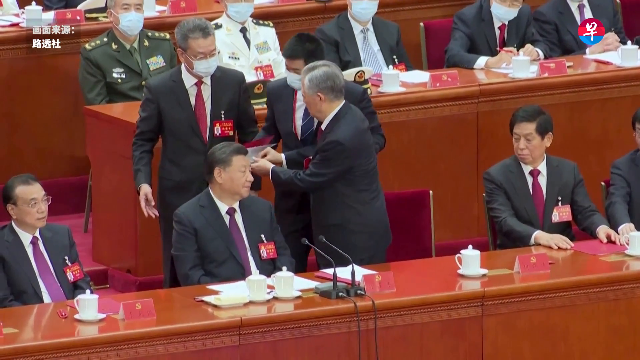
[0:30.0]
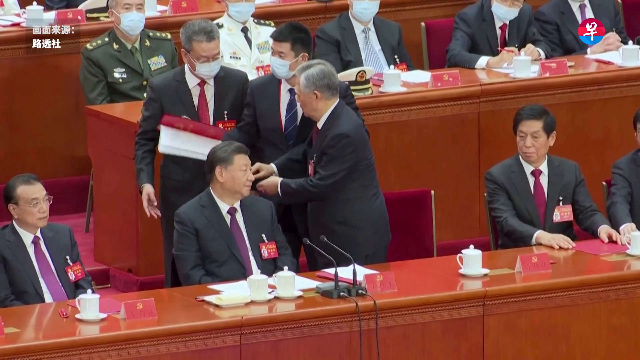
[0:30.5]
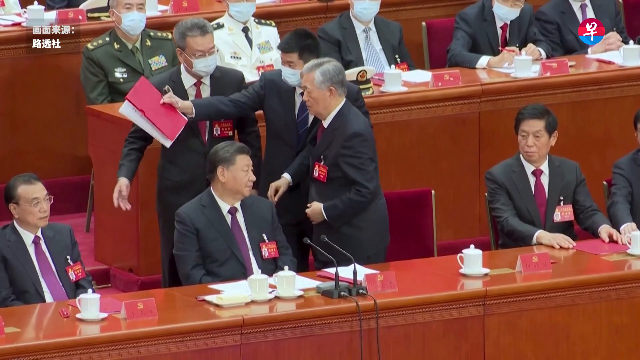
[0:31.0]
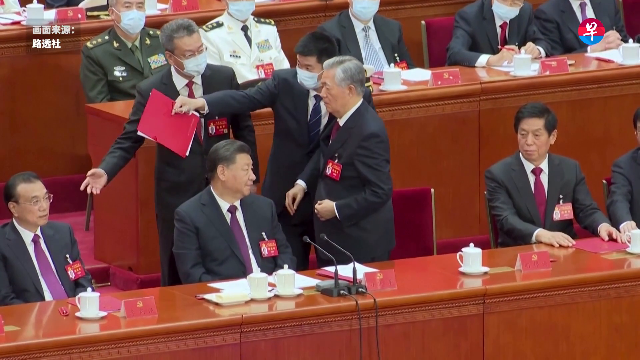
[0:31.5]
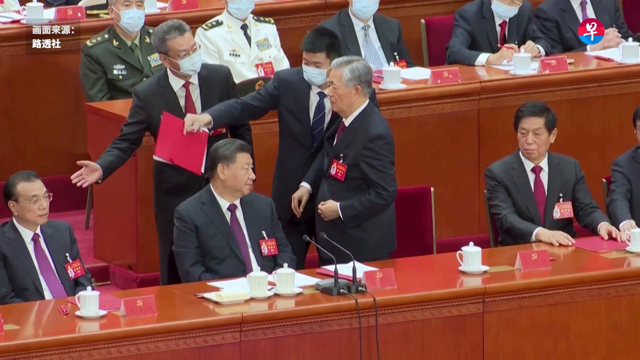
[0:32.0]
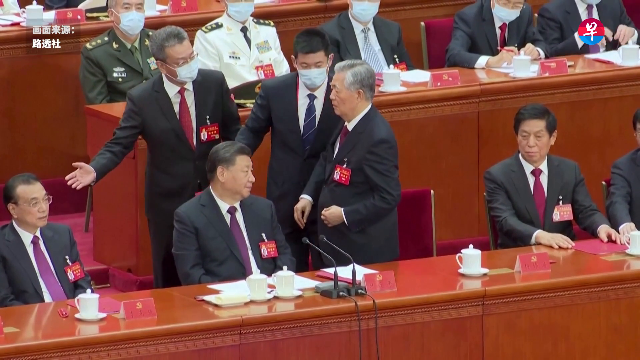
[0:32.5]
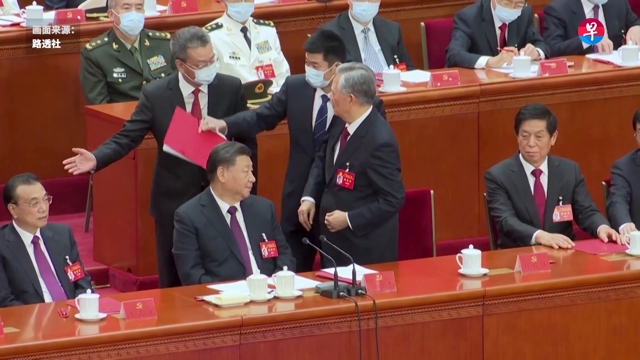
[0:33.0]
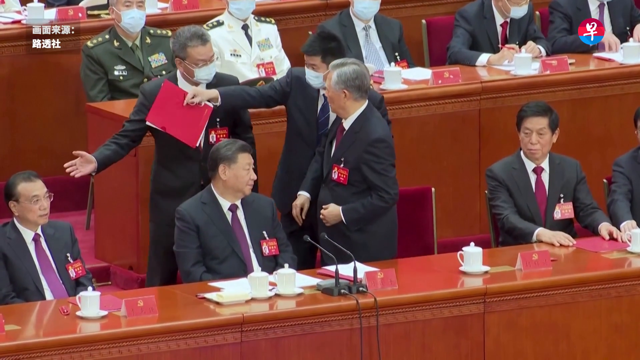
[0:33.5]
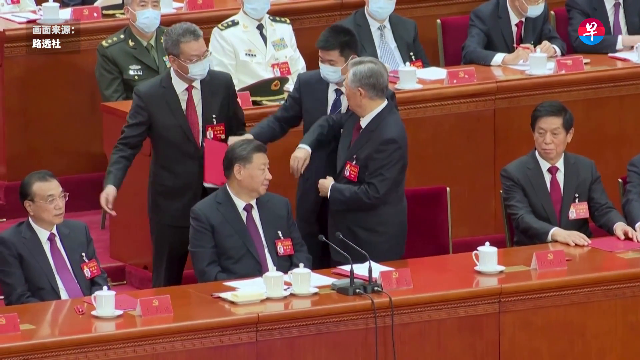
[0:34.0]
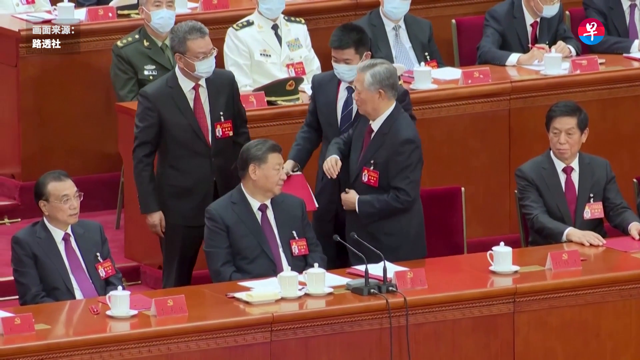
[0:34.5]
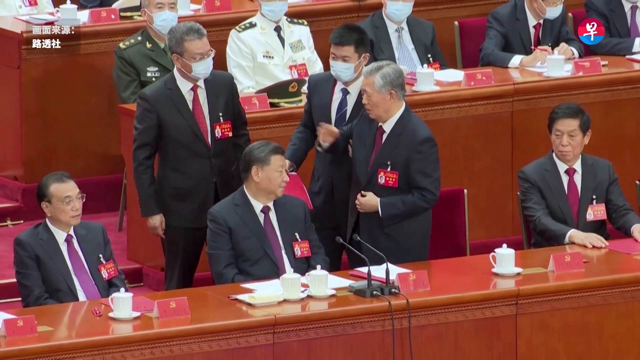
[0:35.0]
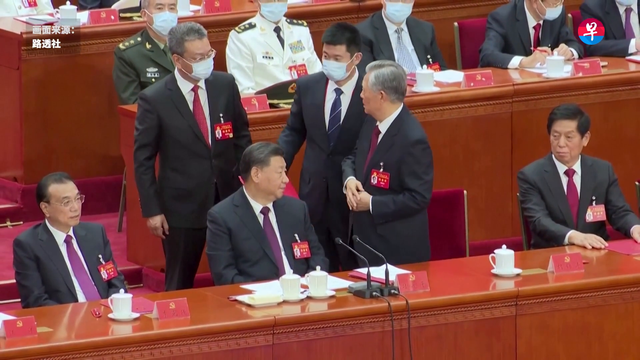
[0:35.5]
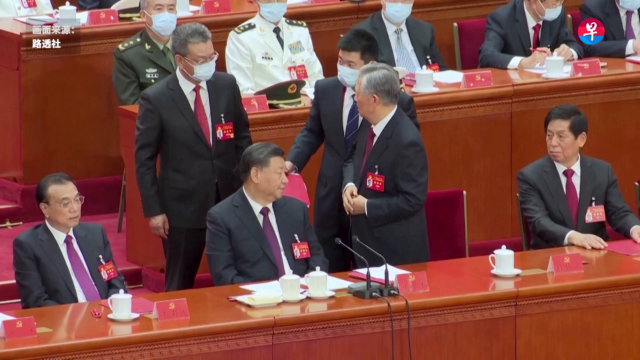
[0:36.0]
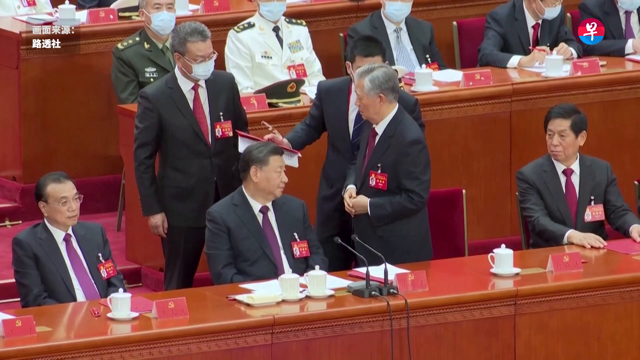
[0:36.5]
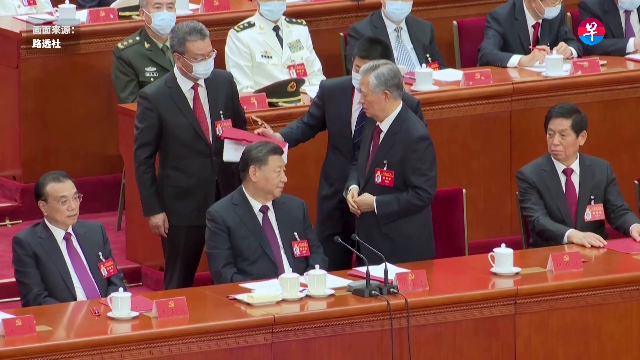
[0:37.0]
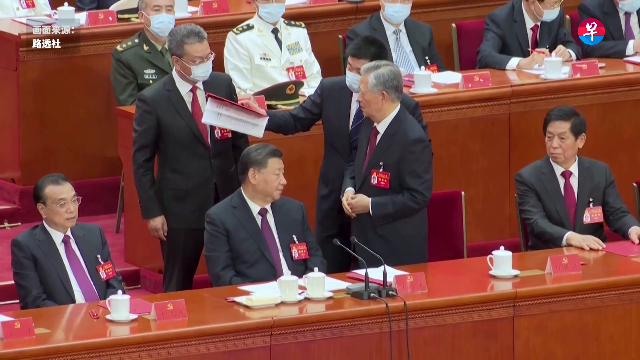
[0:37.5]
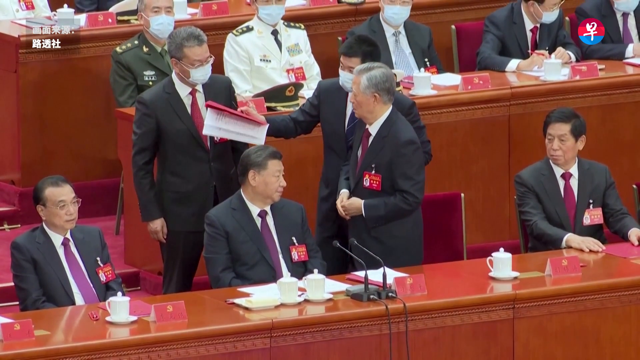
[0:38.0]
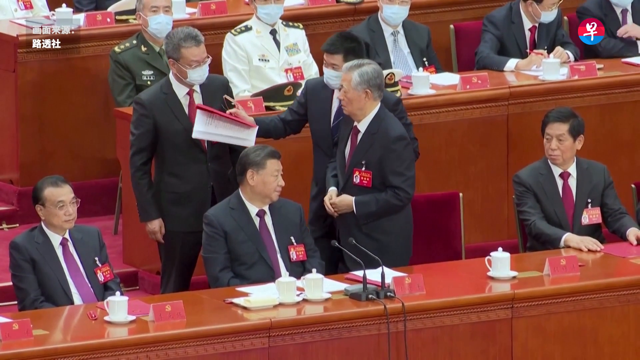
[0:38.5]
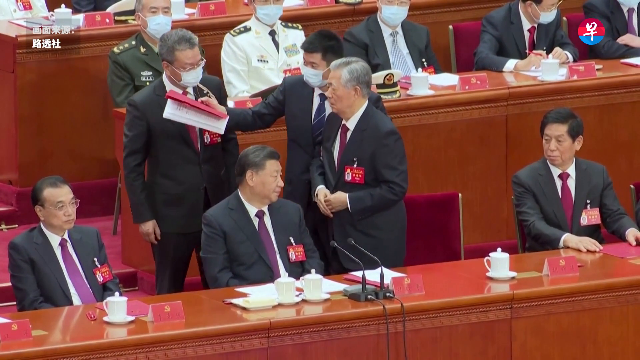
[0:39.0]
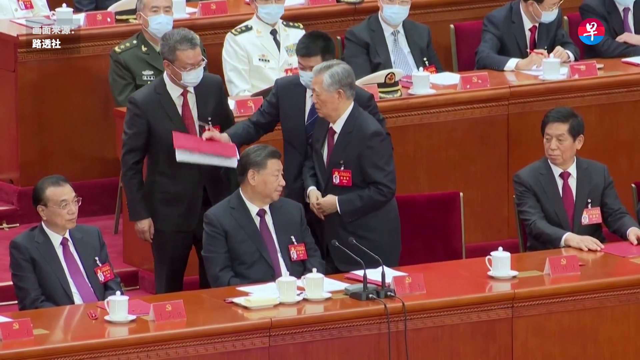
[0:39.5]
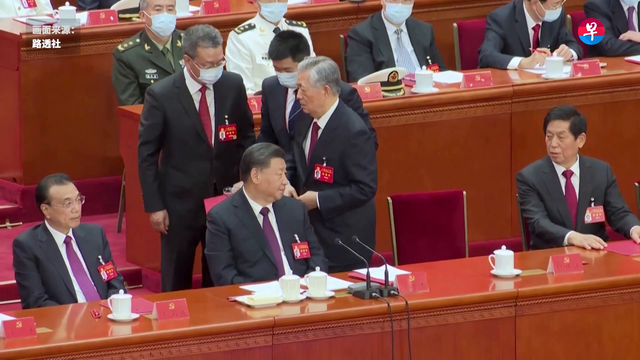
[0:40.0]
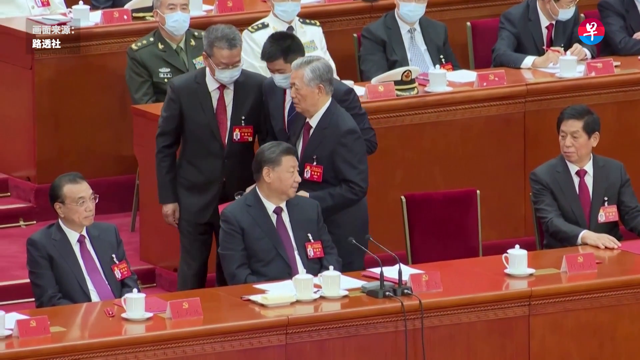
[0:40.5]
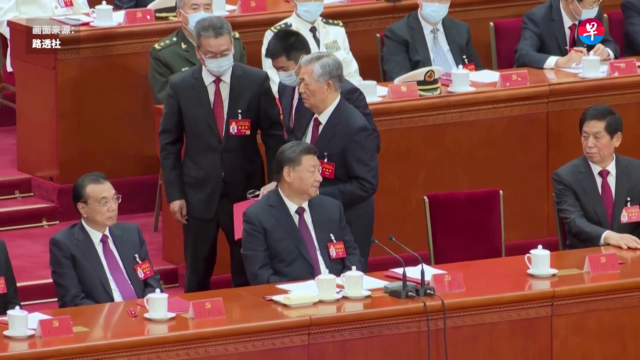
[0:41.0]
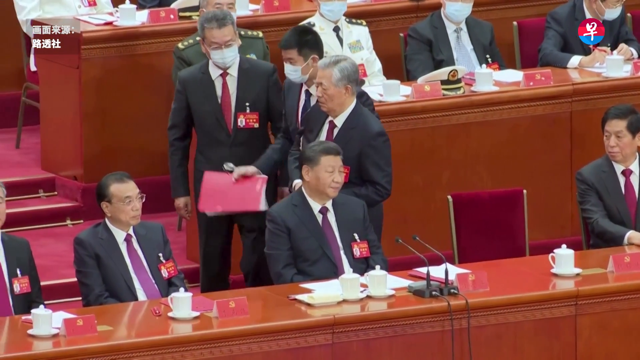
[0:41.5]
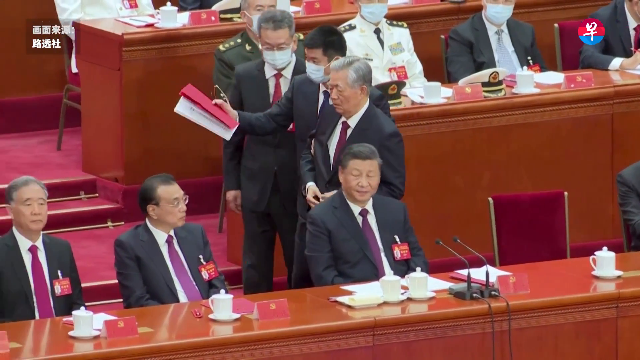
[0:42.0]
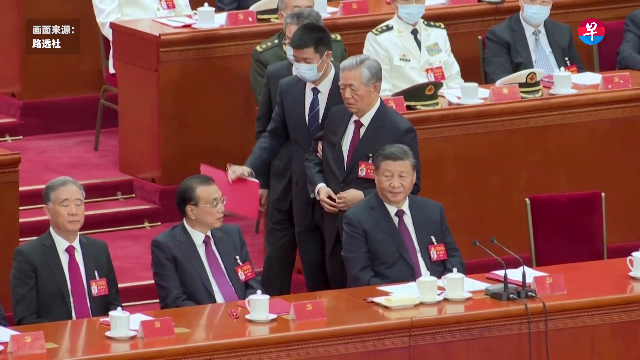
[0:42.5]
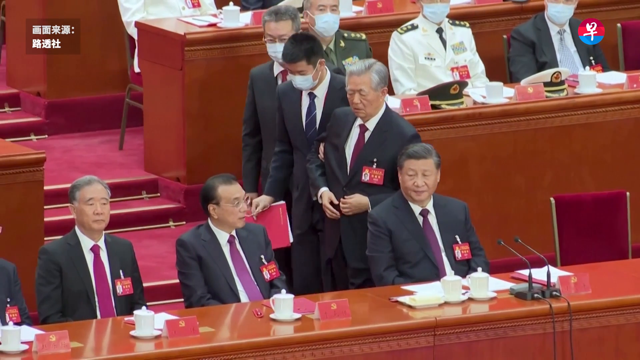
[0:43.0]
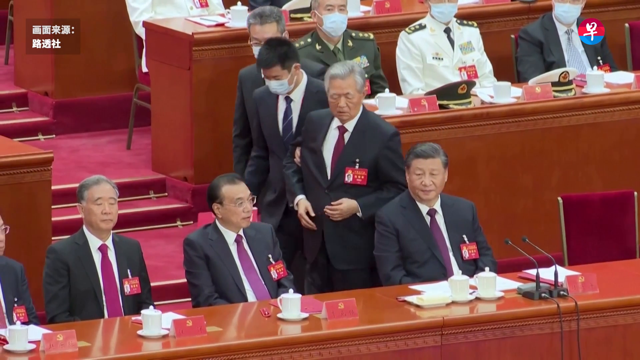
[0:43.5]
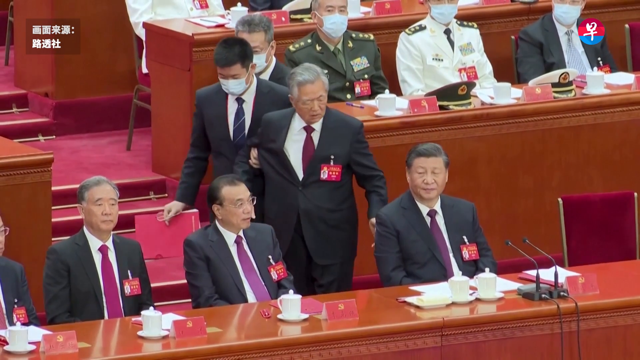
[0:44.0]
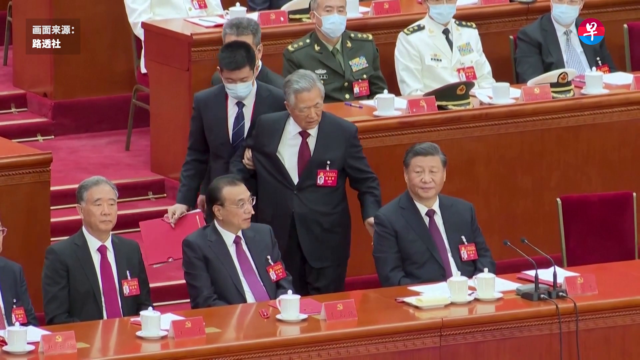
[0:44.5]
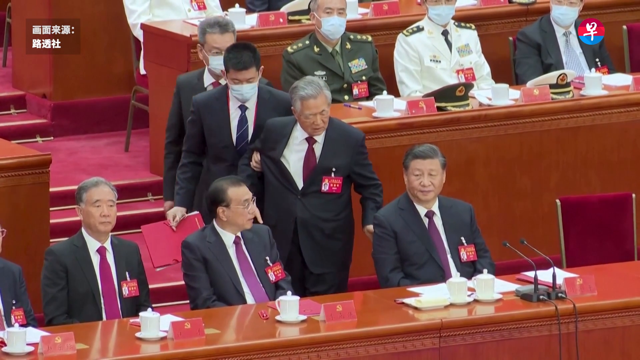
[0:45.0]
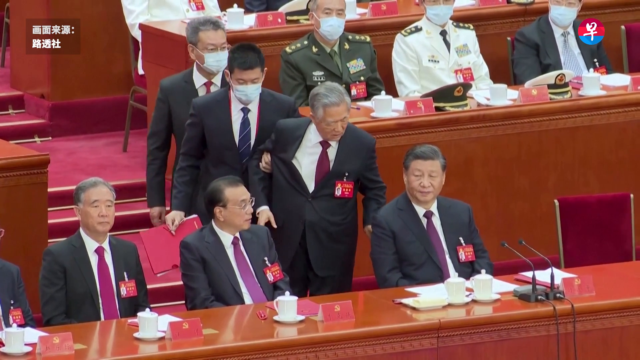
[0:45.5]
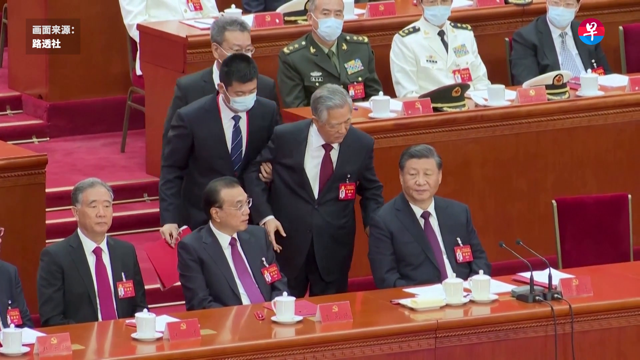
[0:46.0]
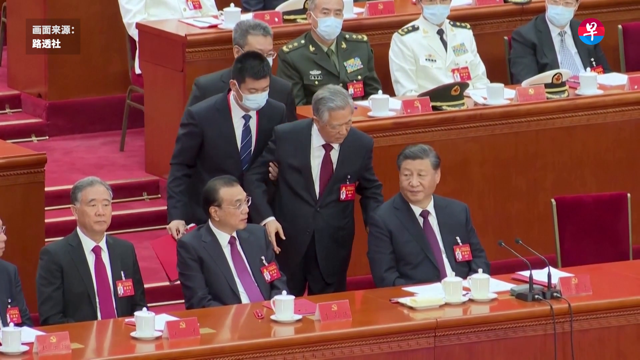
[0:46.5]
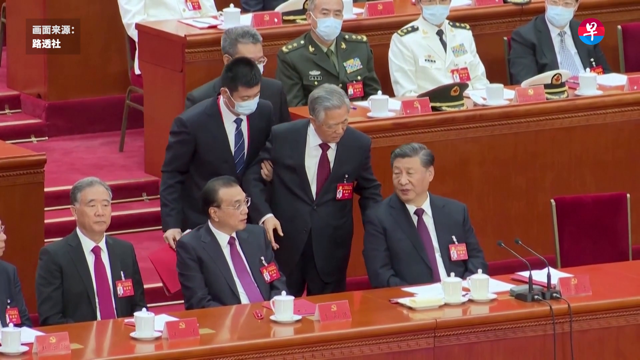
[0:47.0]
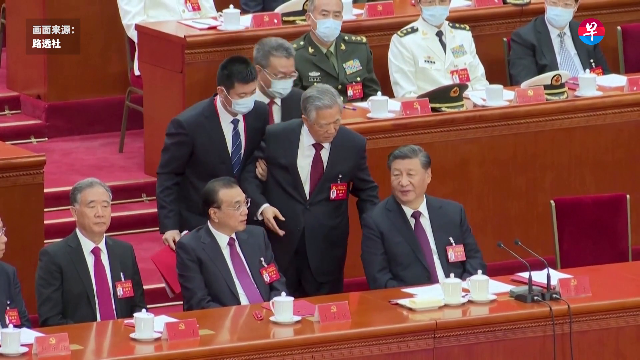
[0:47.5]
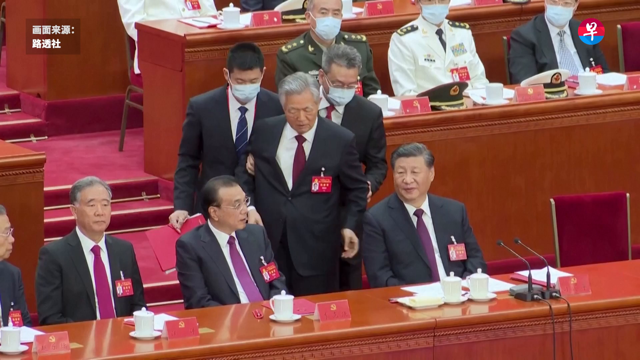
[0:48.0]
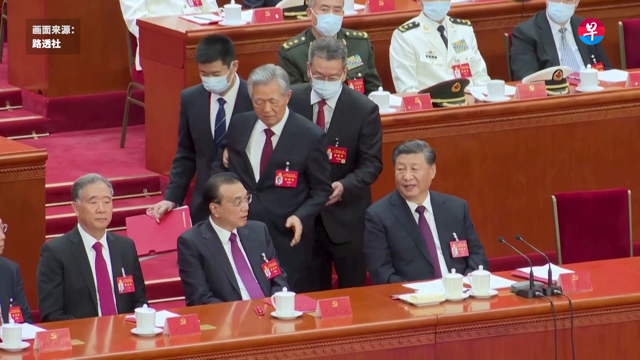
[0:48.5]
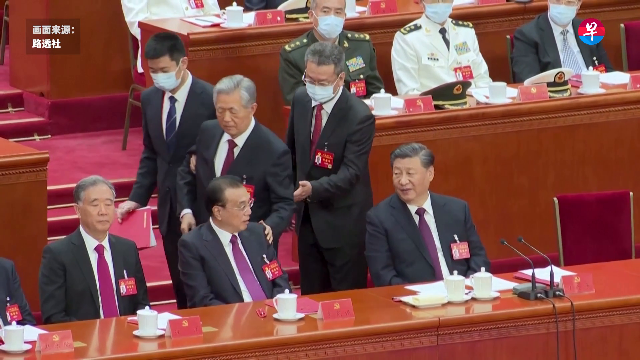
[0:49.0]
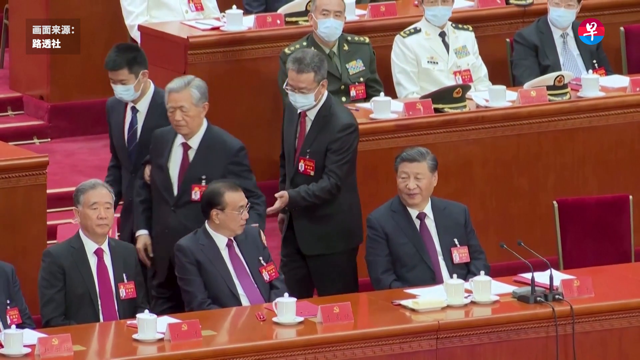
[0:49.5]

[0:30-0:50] An older gentleman in a grey suit is led away by a younger man with darker brown hair in a grey suit. The men wear white collared shirts with purple and burgundy ties. There are rows of brown desks, and the chairs are velvety red, as is the carpet. The older gentleman, who has white and greyish hair, motions to the gentleman in front of him and does not seem to want to leave. The gentlemen sitting in the front row and some in the back all wear a red tag on their jackets. In front of them are white porcelain cups on small white plates. A small light greyish box appears at the top left of the screen with white lettering in another language, and to the top left is a circle, red at the top and blue at the bottom, with a white symbol in the center.